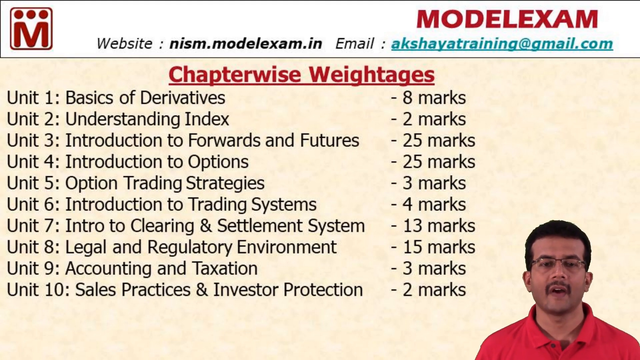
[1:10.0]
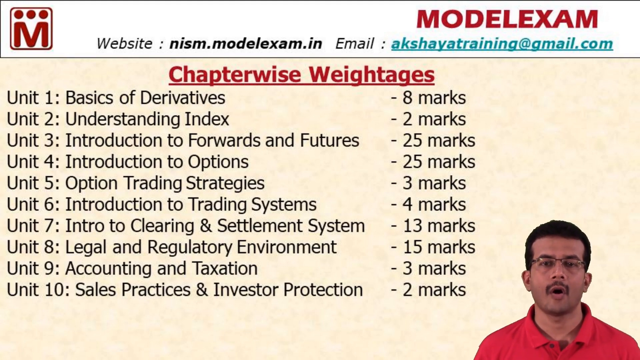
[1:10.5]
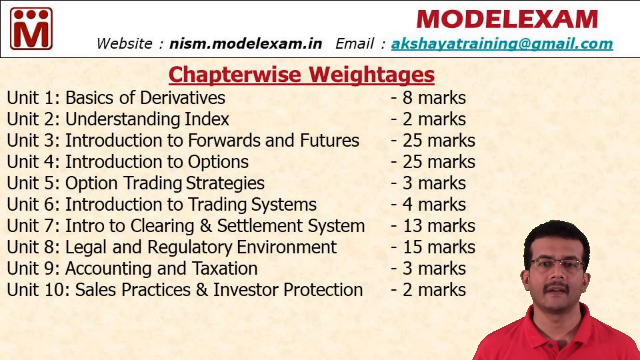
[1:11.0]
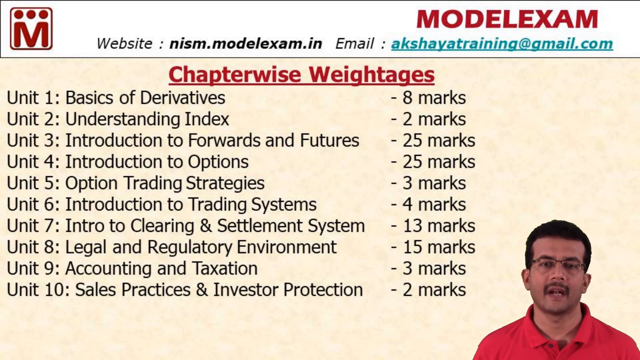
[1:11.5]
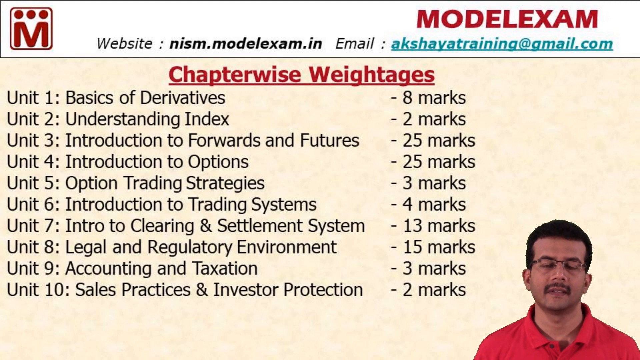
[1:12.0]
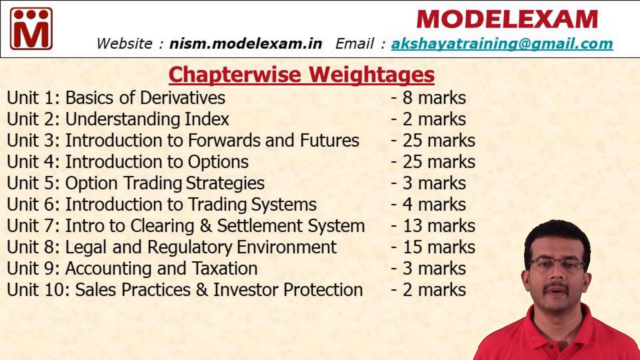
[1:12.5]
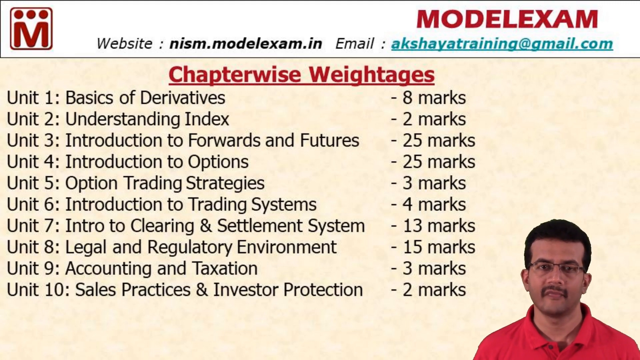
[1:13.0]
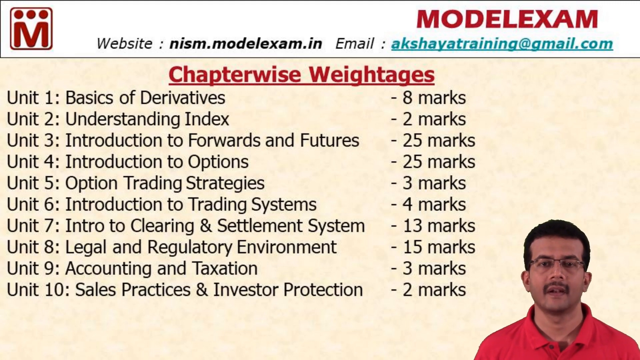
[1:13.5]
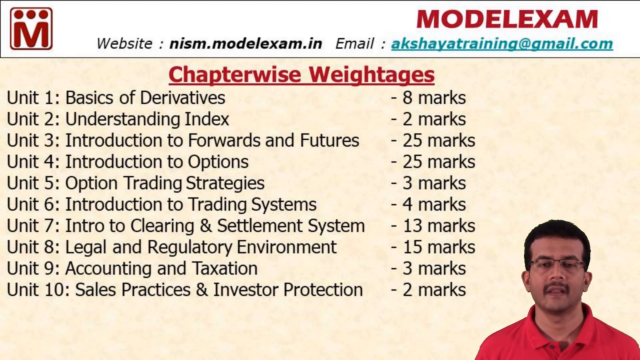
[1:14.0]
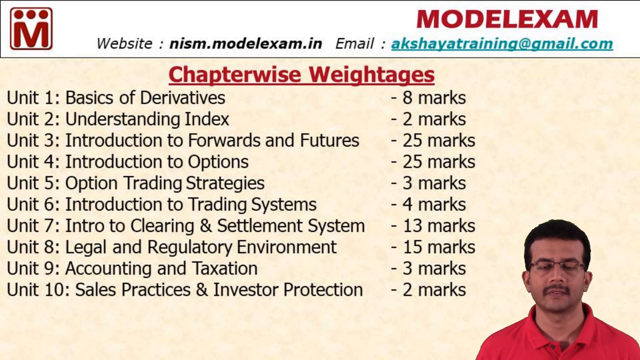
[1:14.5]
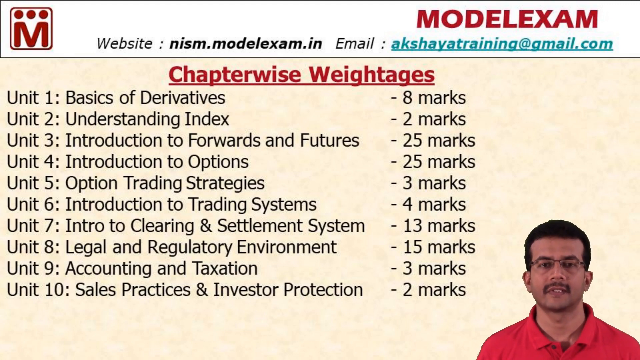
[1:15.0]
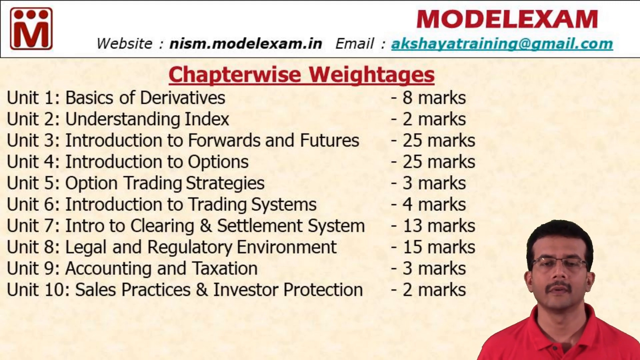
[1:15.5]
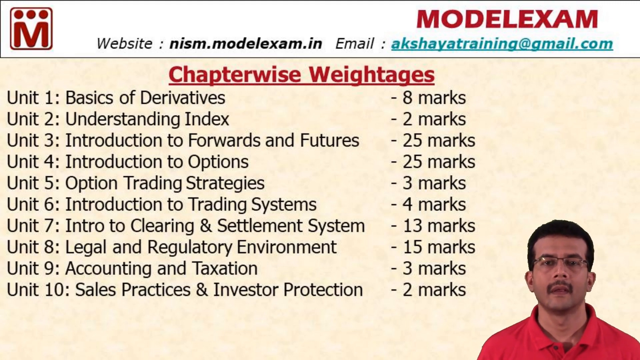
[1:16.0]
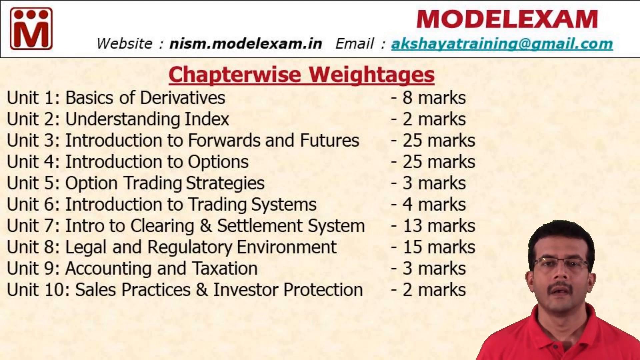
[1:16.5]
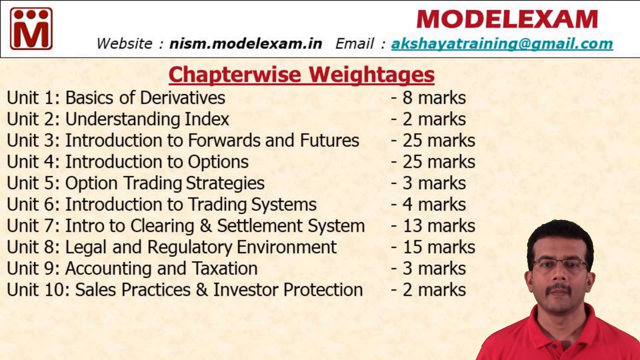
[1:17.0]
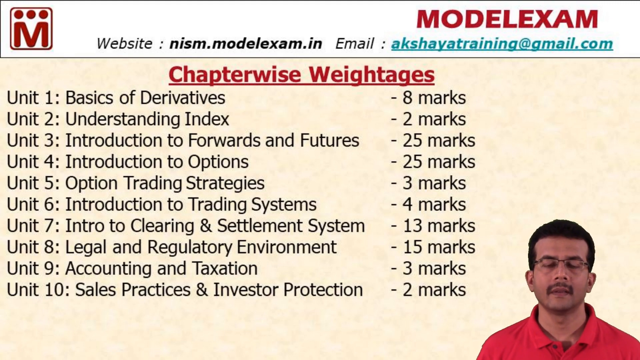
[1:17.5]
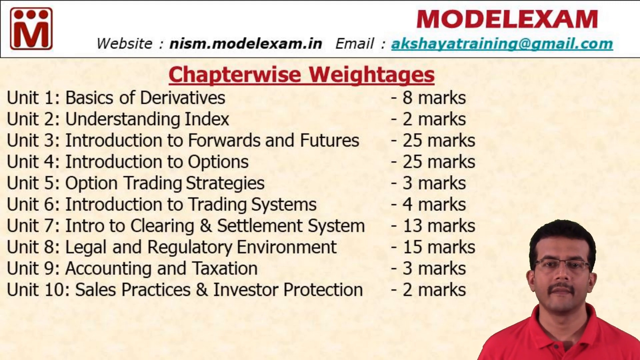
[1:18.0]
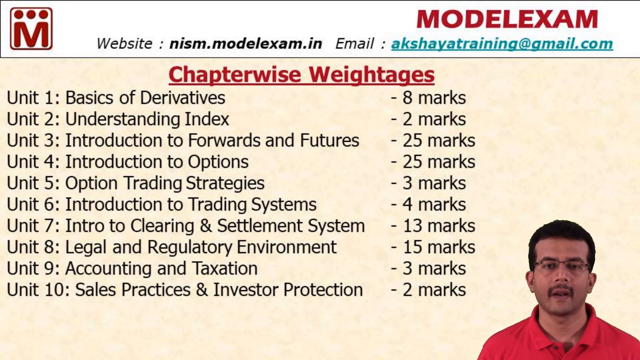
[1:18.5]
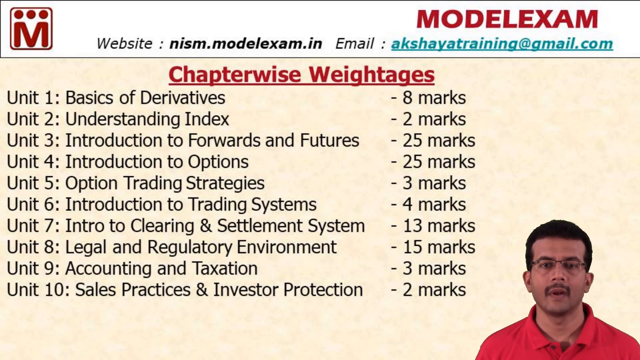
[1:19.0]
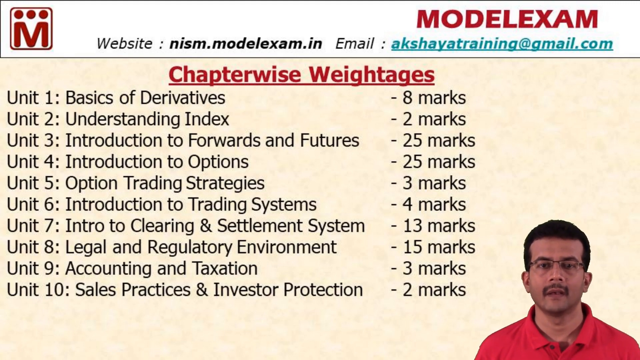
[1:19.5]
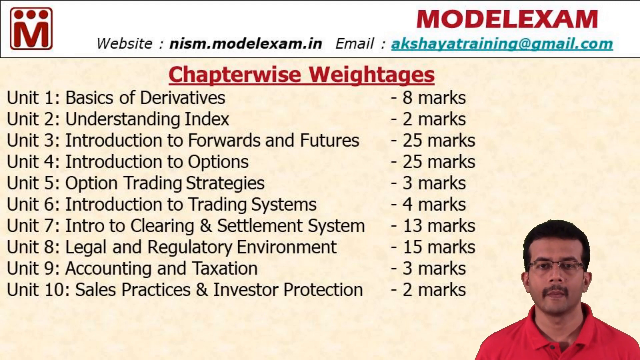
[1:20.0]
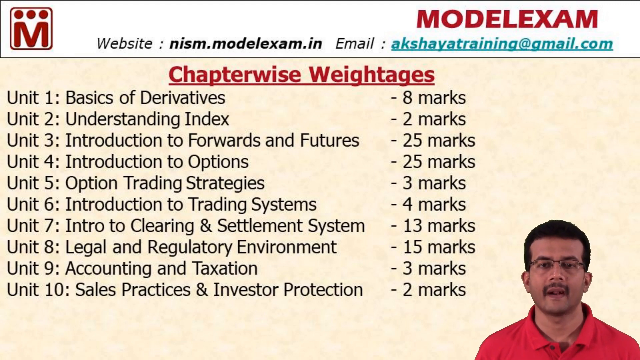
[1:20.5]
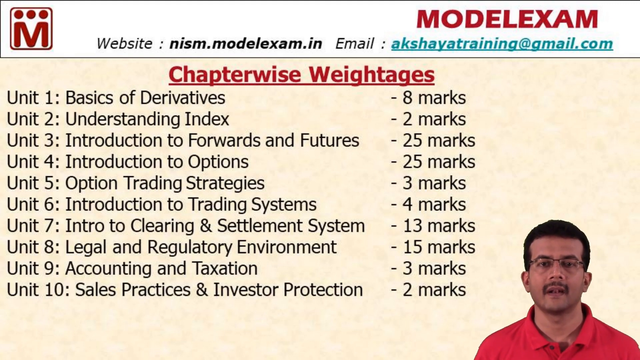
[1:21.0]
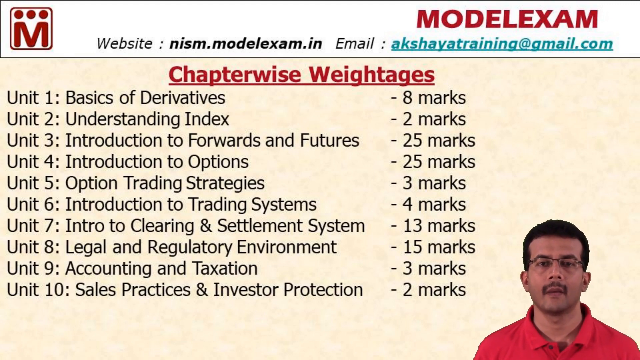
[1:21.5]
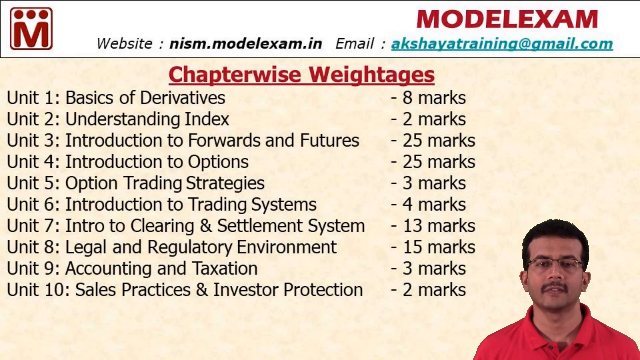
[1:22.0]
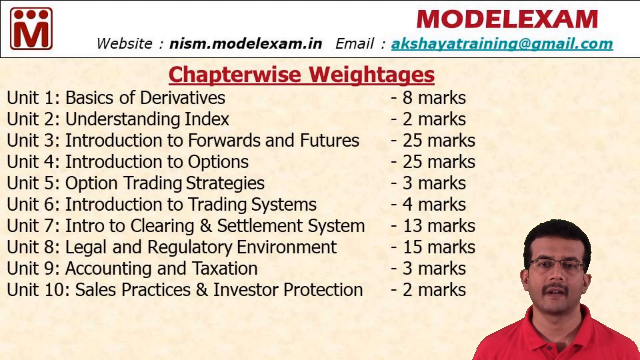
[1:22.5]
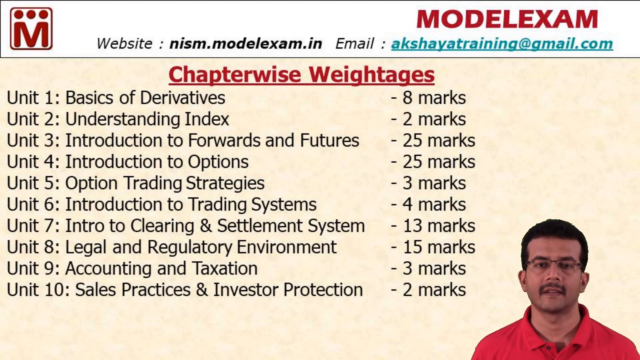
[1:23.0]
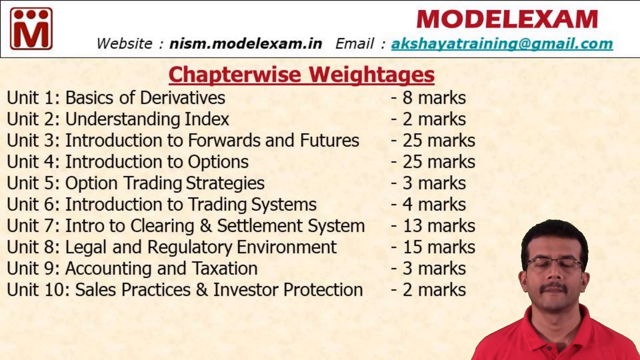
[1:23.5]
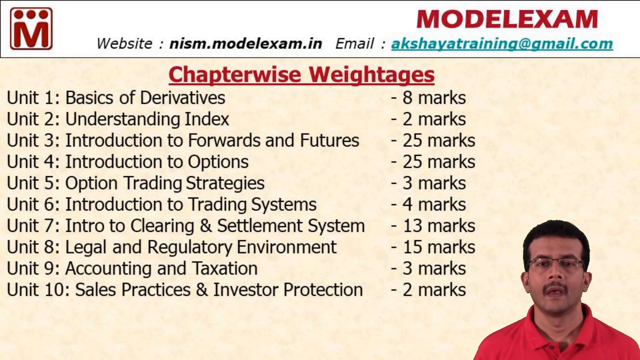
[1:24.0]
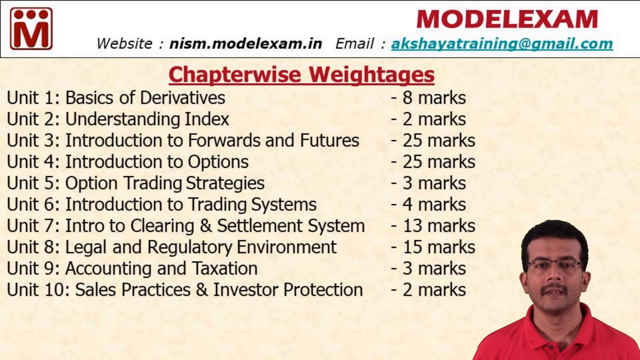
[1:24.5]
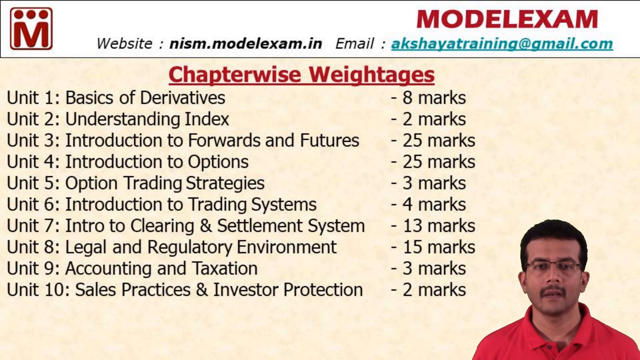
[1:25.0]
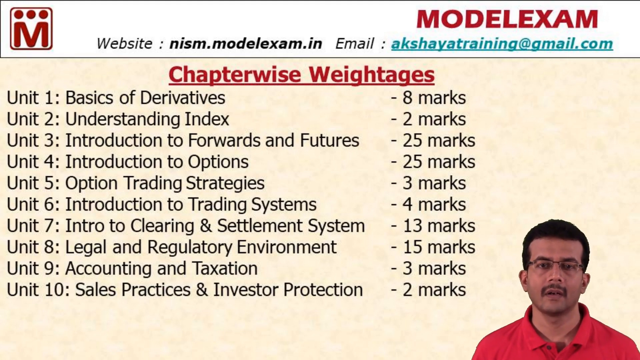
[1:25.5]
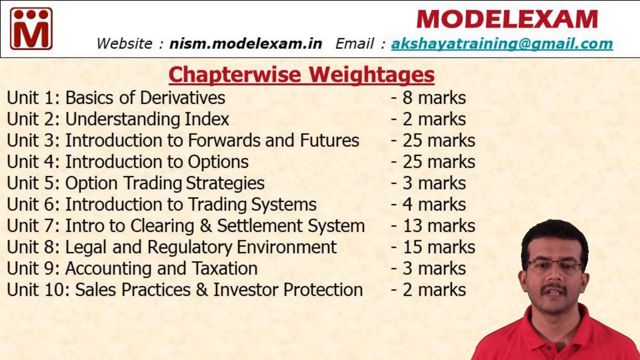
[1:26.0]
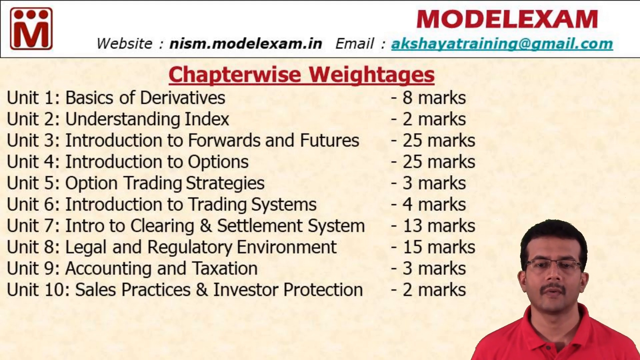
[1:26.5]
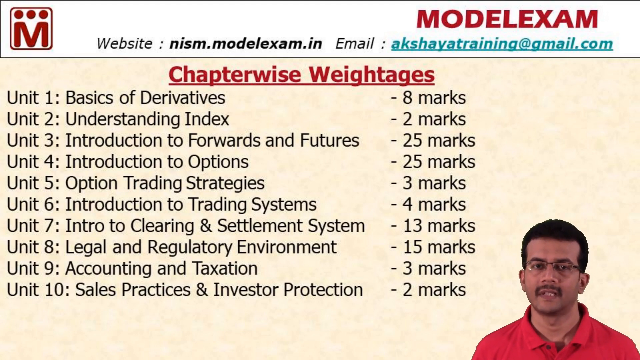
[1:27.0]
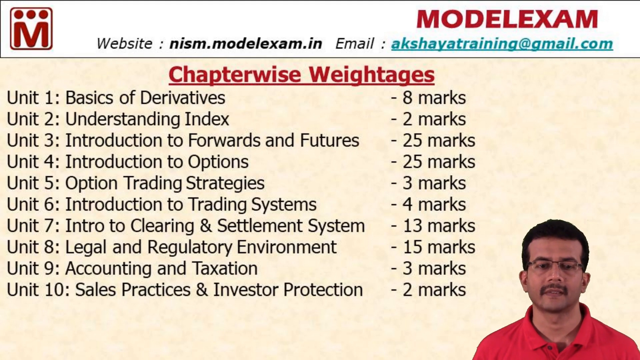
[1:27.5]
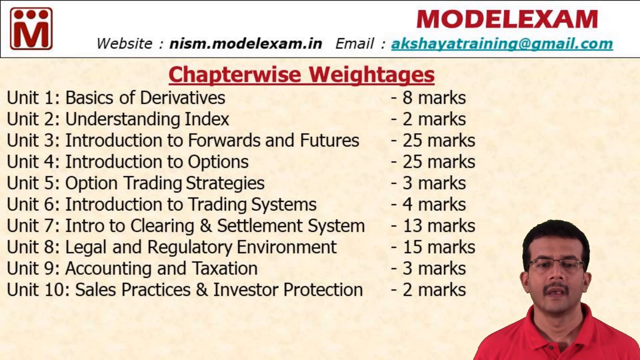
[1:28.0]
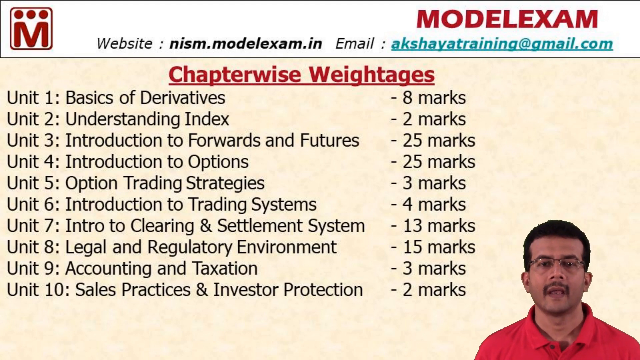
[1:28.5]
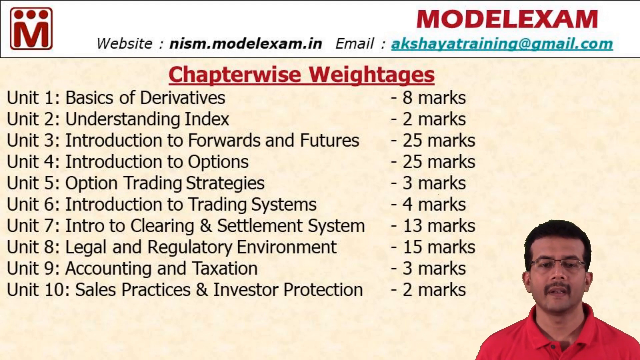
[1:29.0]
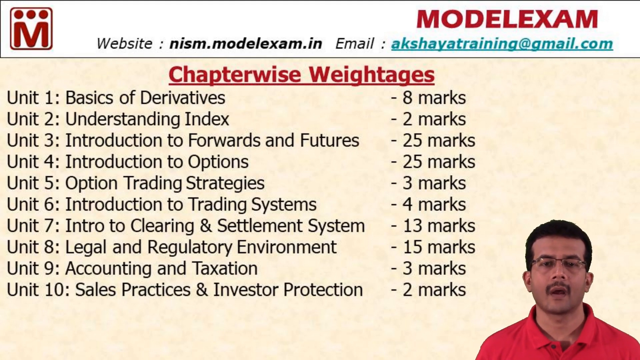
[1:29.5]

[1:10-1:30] The man is in the bottom right corner, visible from the shoulders up. He wears a red shirt with a folded-down collar and rectangular glasses that appear to have a frame only at the top and not the bottom. He has dark, close-cropped hair and a mustache, and he speaks toward the camera. He shifts only slightly in position, apparently natural rather than deliberate movement. The text, colors and icons in the background remain static.